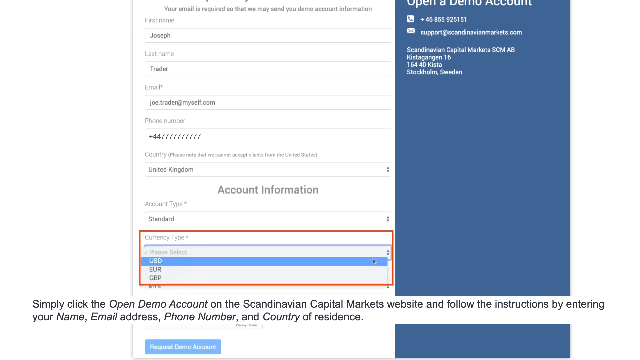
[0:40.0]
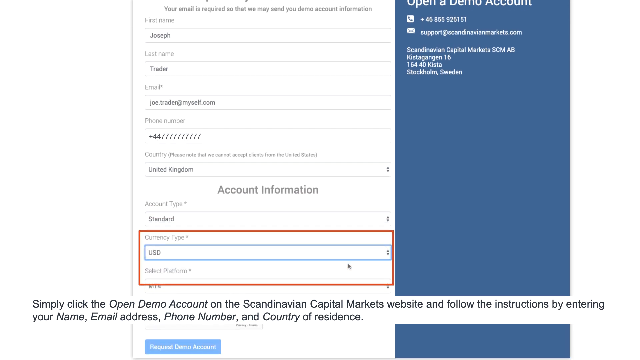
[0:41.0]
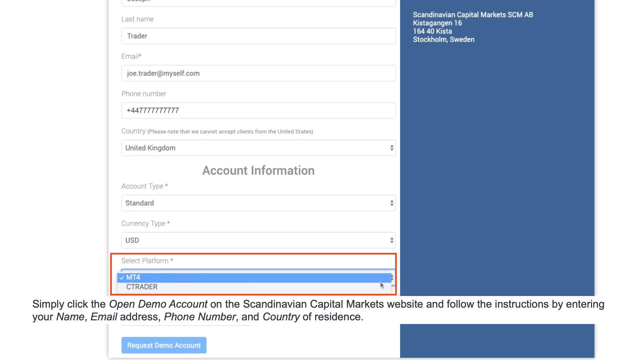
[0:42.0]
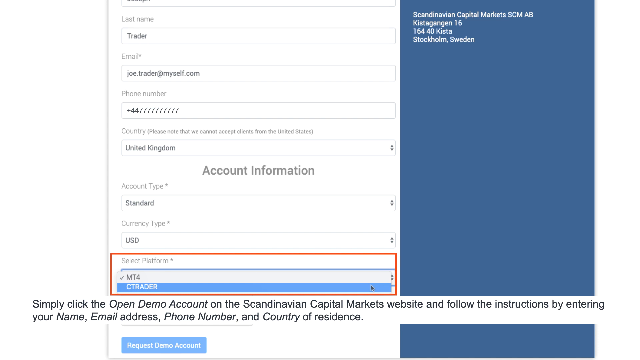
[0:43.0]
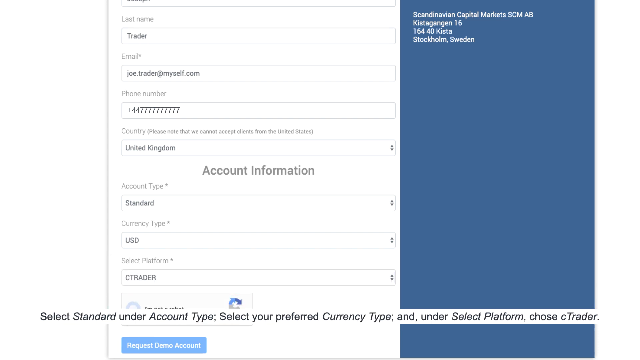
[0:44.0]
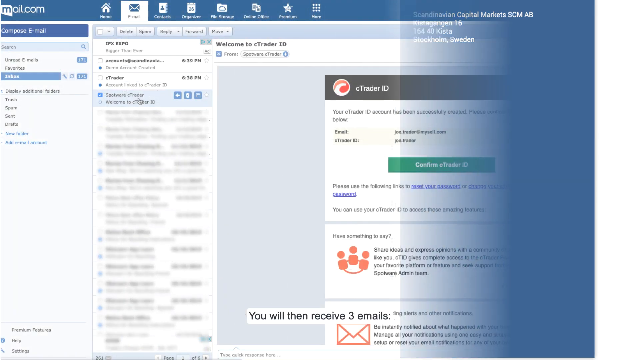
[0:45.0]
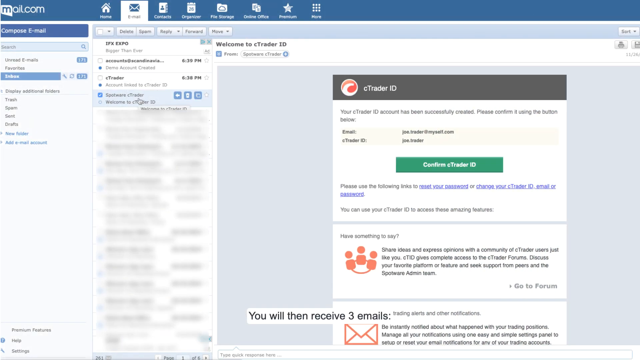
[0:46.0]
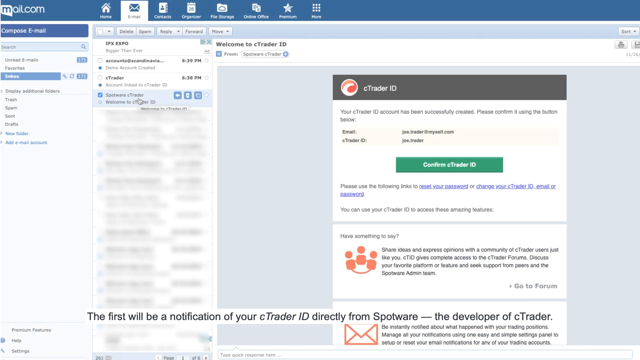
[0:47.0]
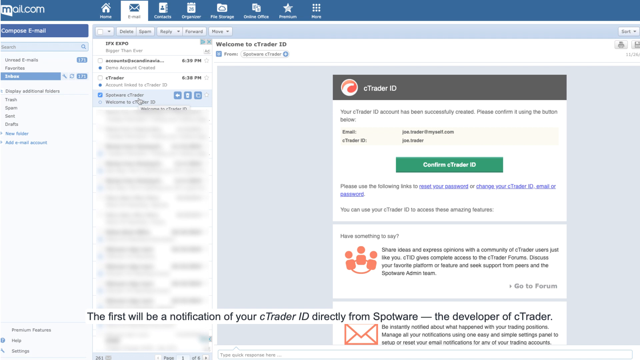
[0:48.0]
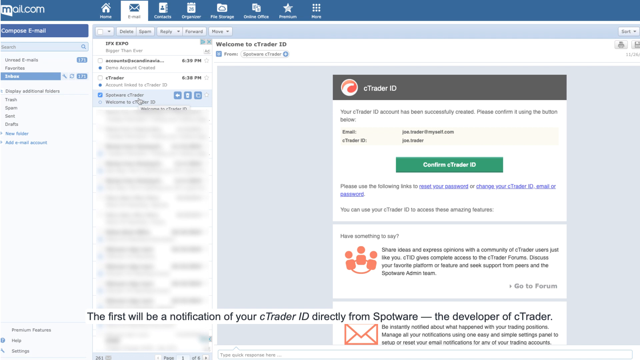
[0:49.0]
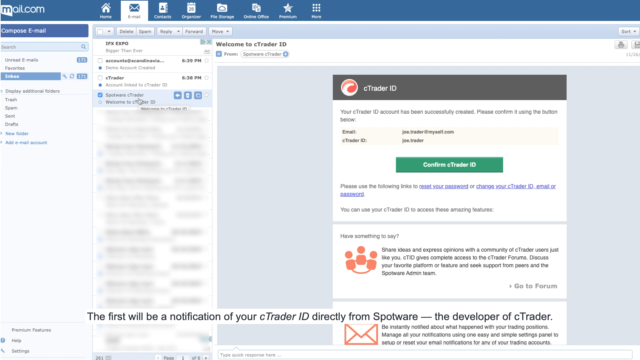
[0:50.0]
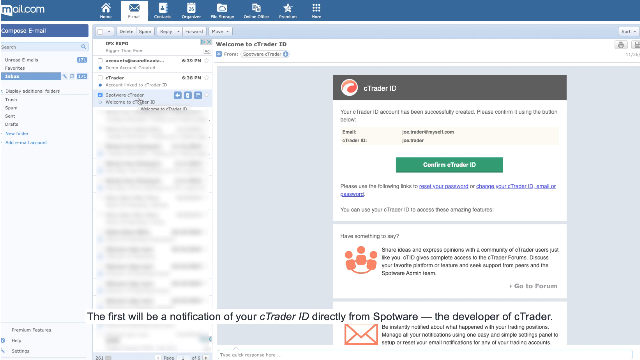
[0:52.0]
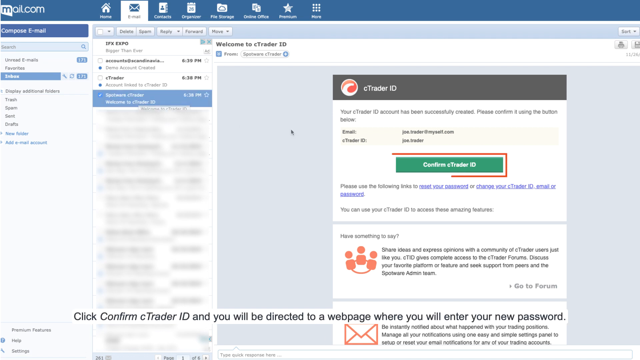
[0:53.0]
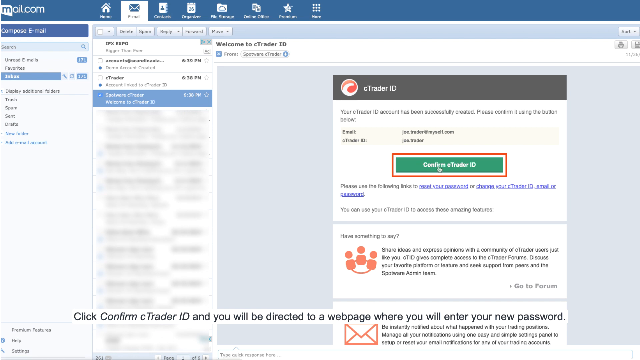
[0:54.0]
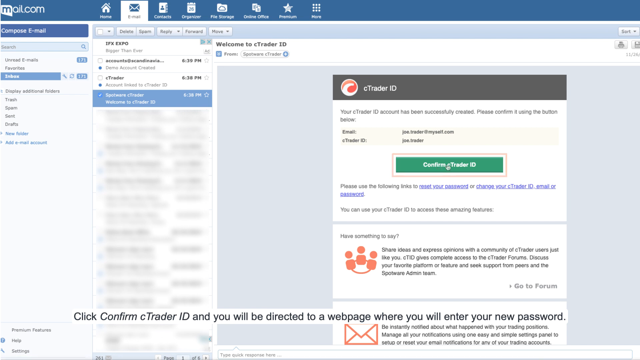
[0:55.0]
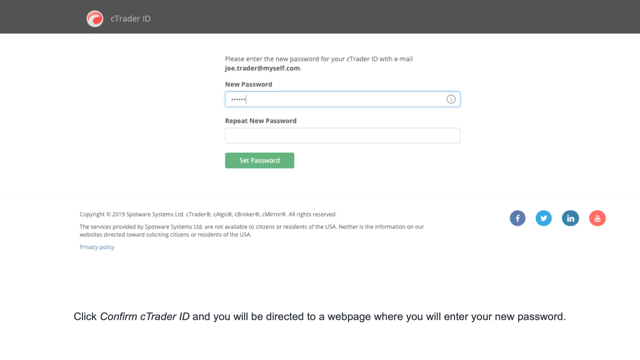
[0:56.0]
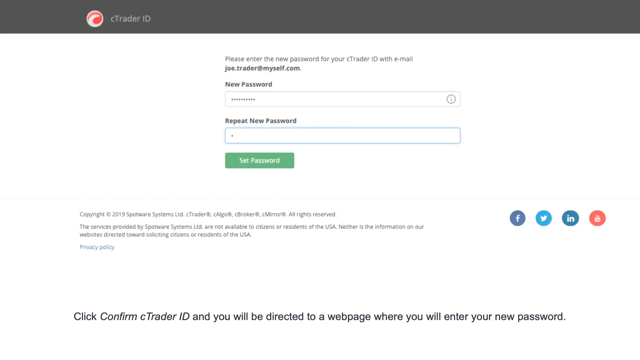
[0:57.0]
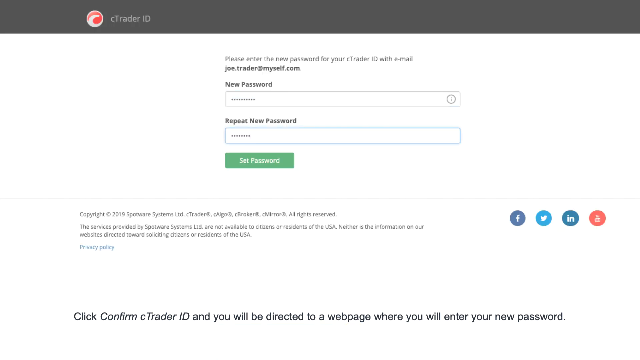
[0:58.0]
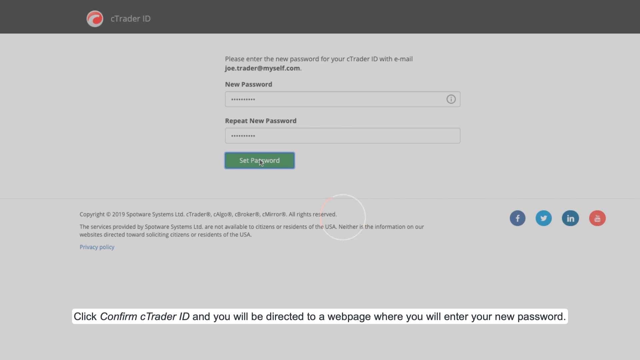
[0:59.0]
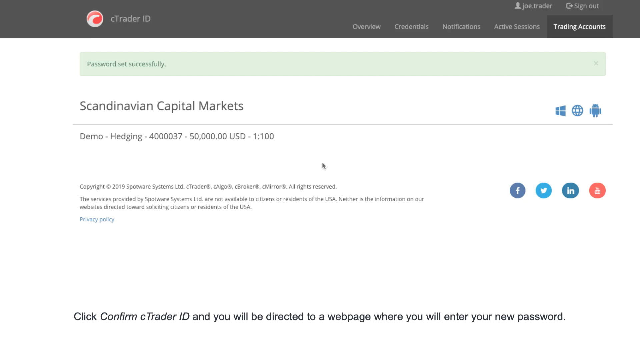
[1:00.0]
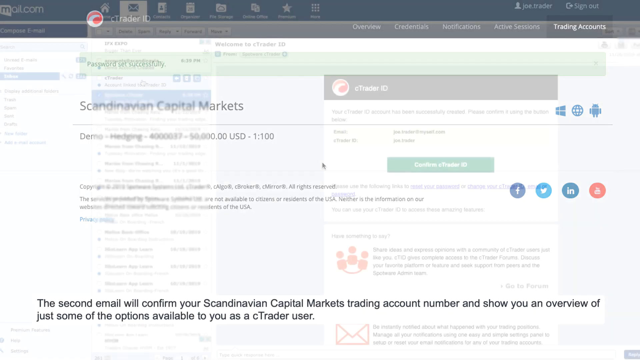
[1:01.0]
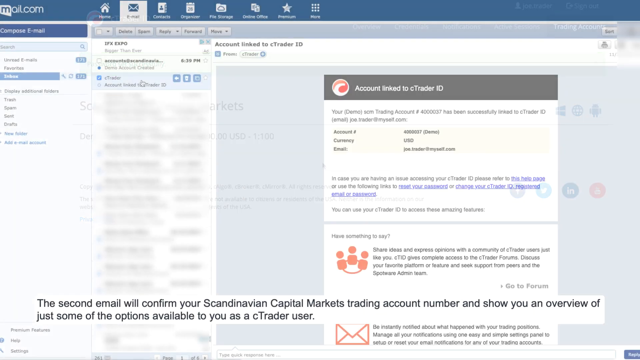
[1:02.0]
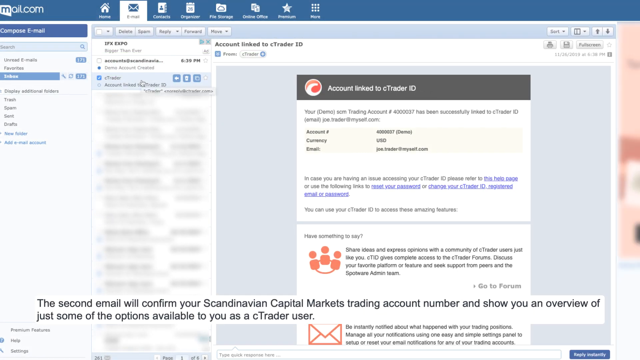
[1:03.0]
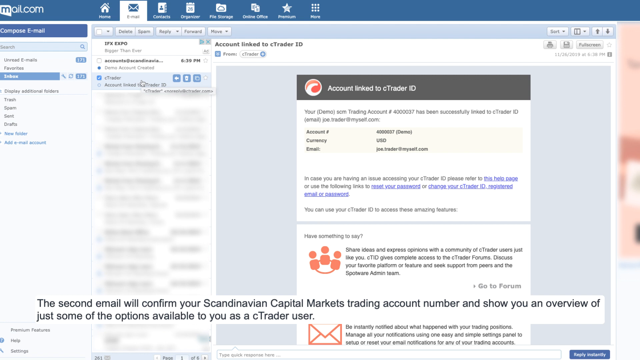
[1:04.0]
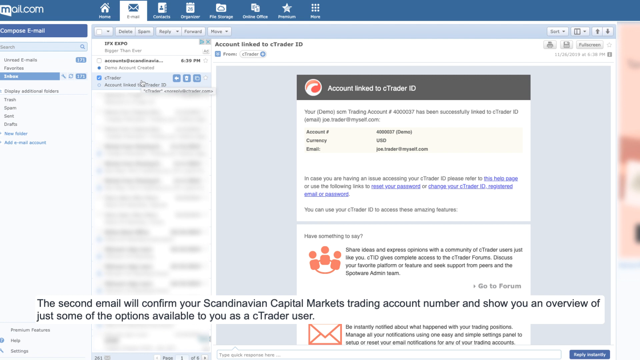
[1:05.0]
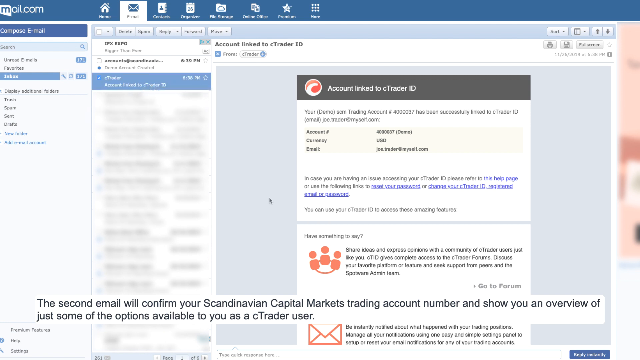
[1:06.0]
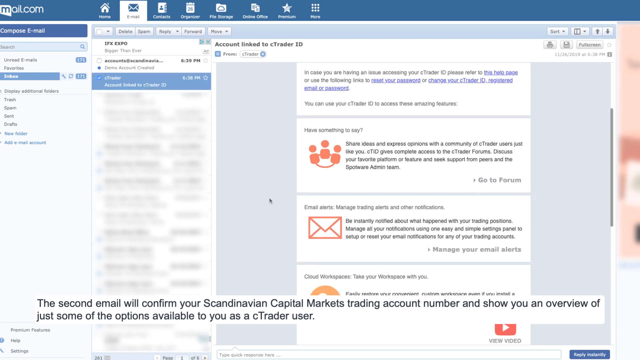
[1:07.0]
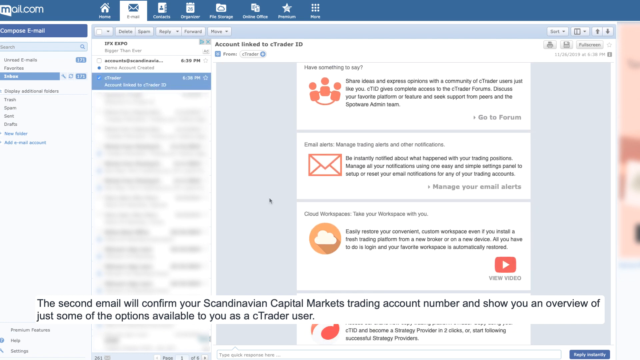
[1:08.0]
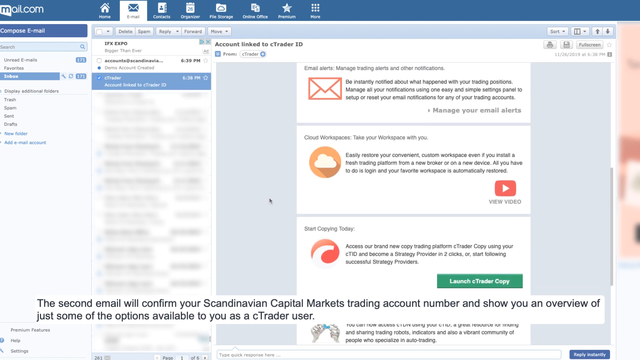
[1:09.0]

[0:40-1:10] Further down the page is a choice of platform, and cTrader is selected. The screen wipes to the next page, which states that notification will come directly from Spotware and lets the user choose an email address to be notified at. On the right is the cTrader confirmation ID. Across the top of the screen are options for Home, Contacts, Organizer, File Storage and other options. A red box highlights the green cTrader ID confirmation button, and the mouse cursor goes over the button. Once it is pressed, a prompt appears to enter a password and then repeat it. After the password is set, the page changes to show the demo hedging number and confirms with "password set successfully." The website then returns to the email page, where the cTrader email is selected and the page begins to scroll down.